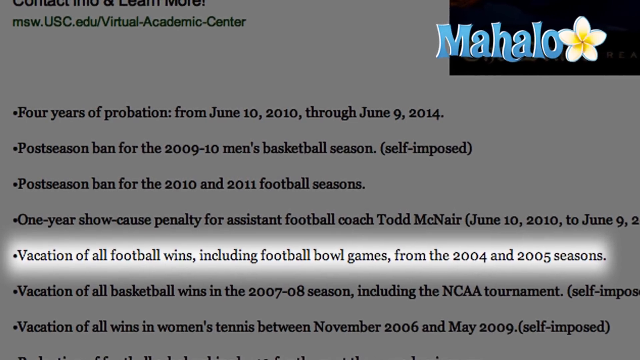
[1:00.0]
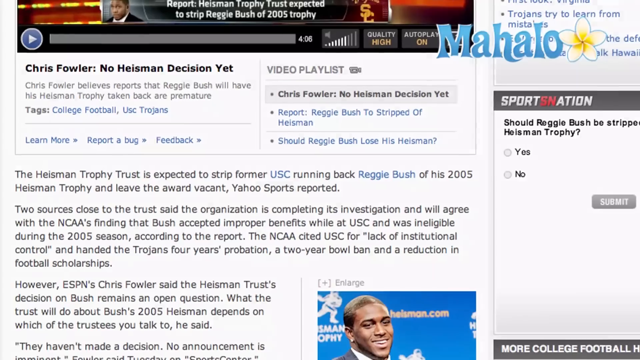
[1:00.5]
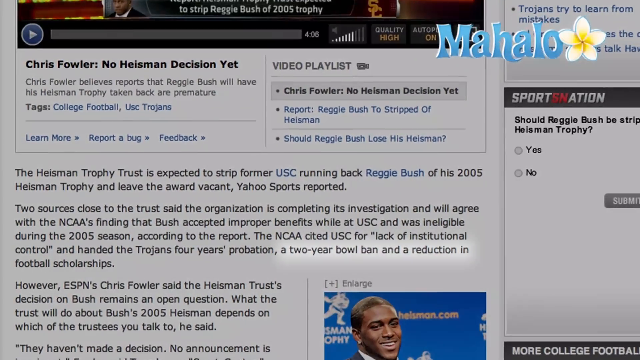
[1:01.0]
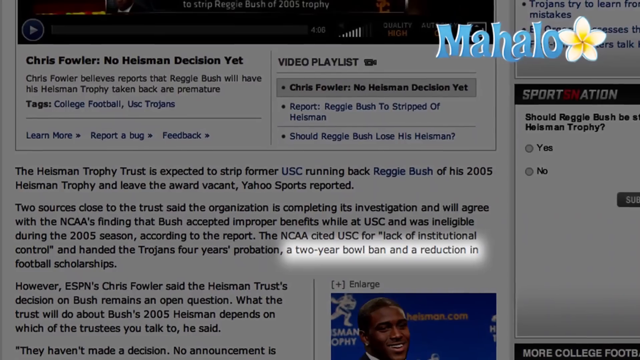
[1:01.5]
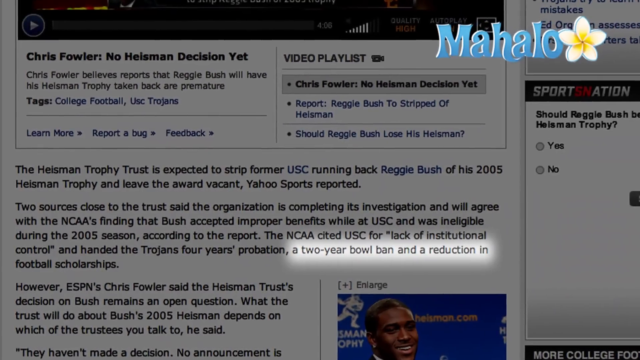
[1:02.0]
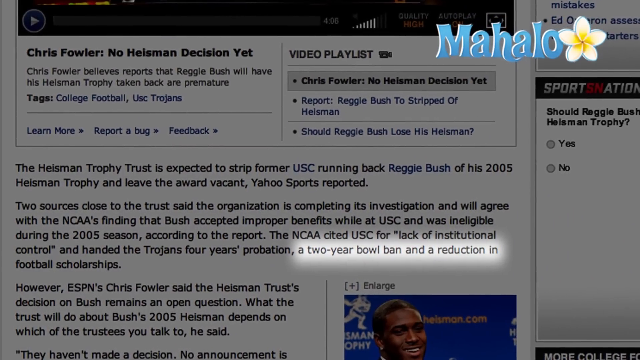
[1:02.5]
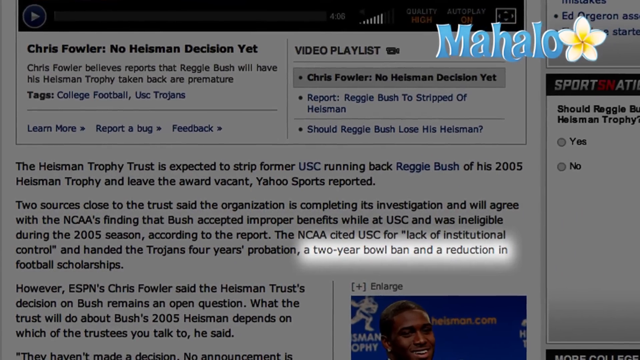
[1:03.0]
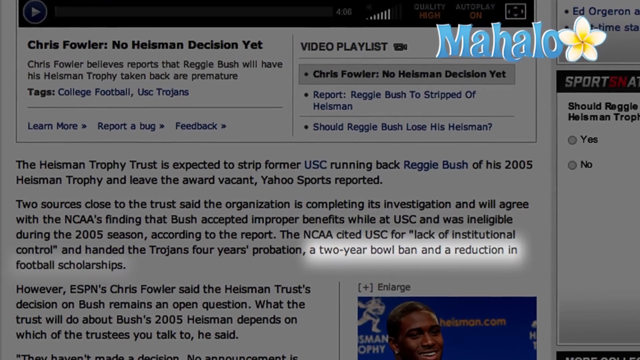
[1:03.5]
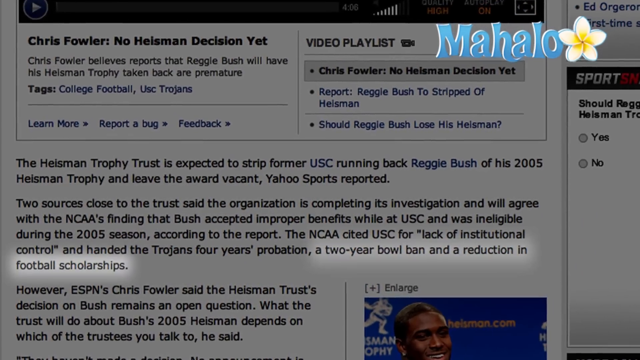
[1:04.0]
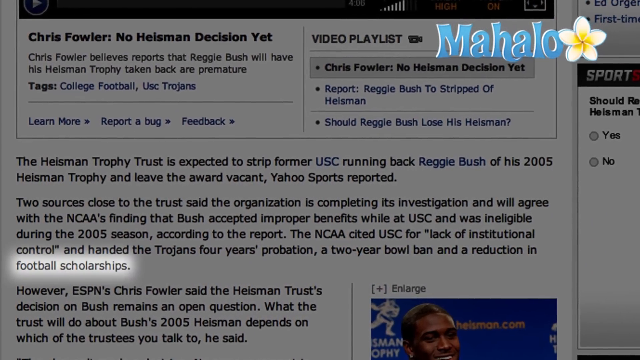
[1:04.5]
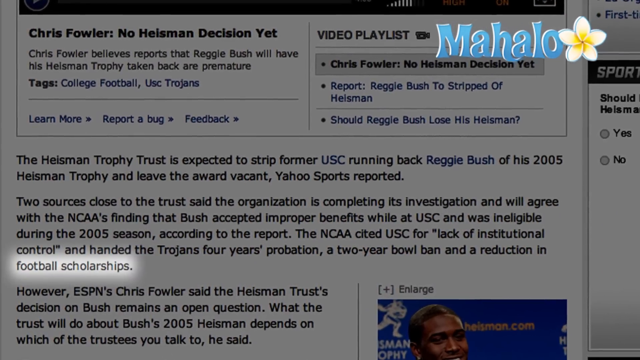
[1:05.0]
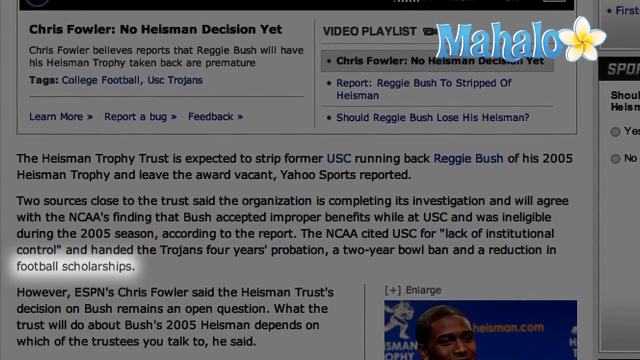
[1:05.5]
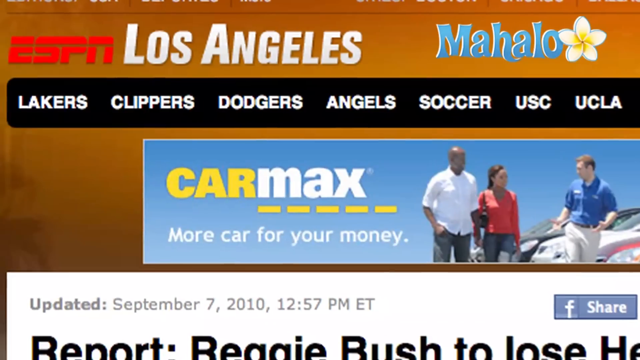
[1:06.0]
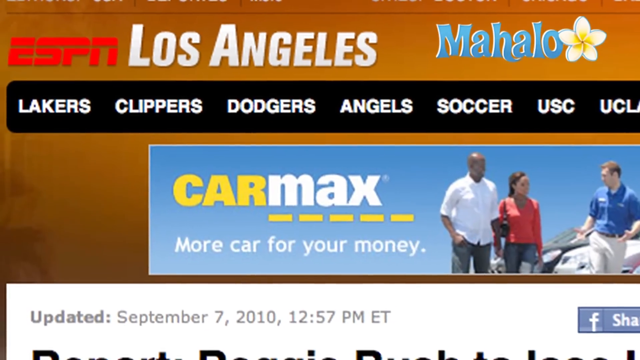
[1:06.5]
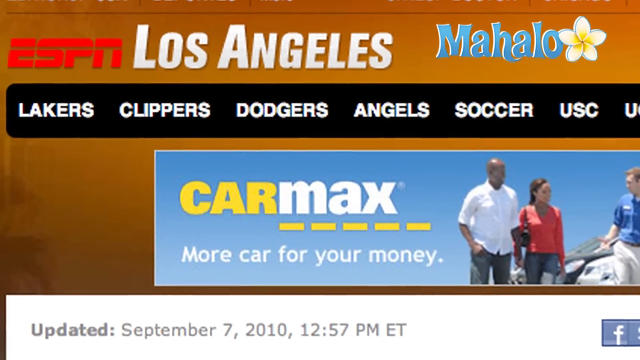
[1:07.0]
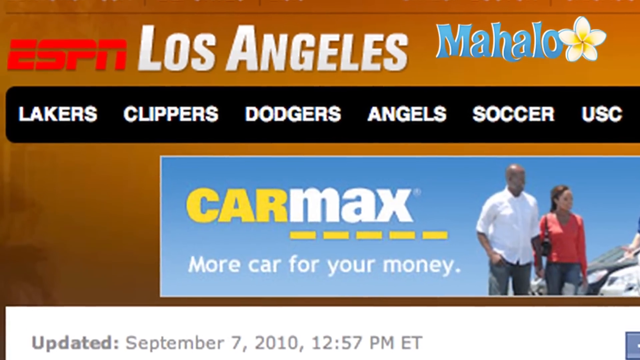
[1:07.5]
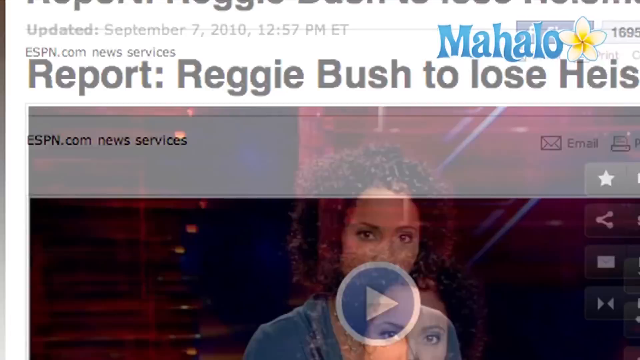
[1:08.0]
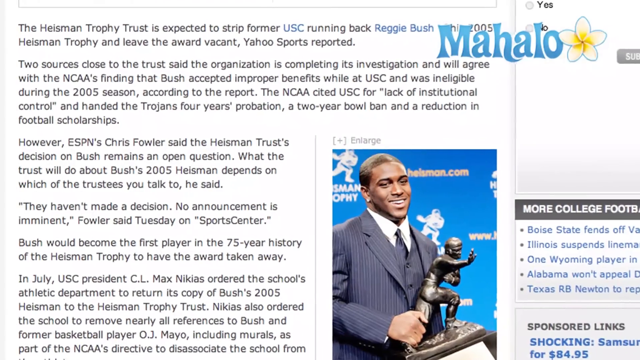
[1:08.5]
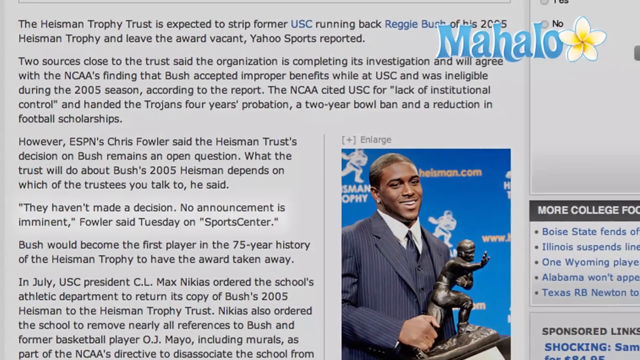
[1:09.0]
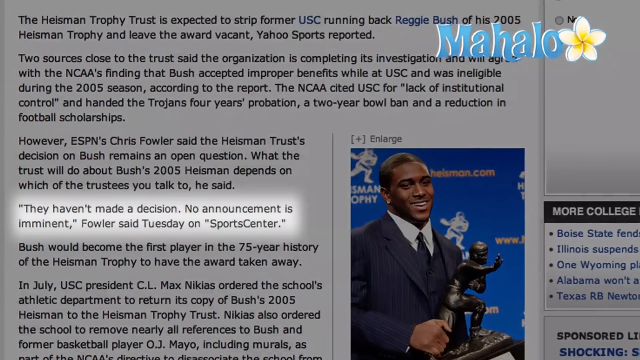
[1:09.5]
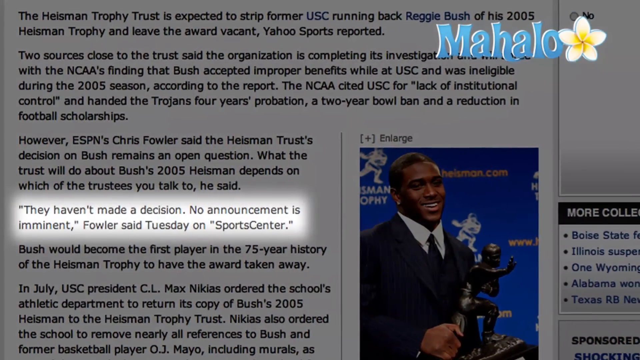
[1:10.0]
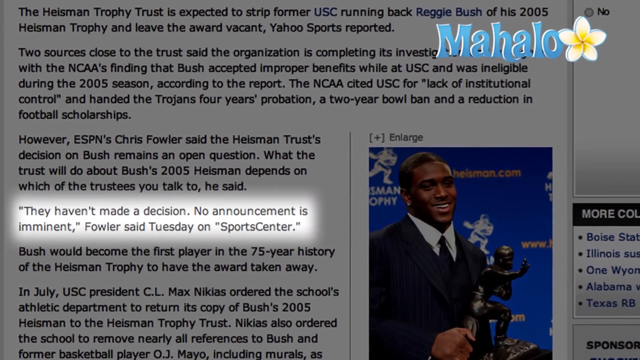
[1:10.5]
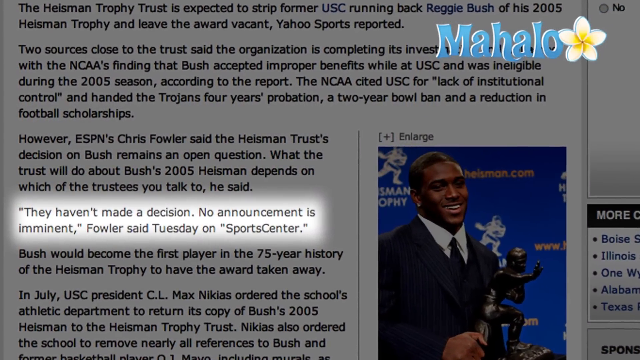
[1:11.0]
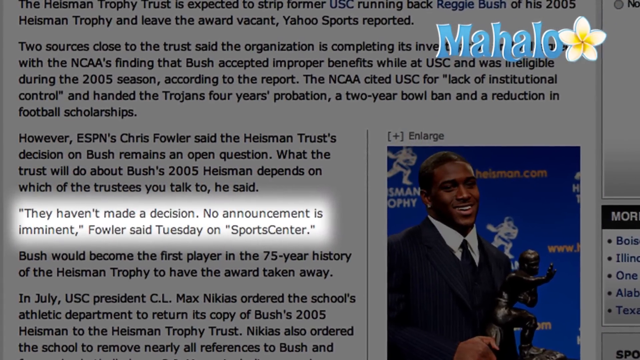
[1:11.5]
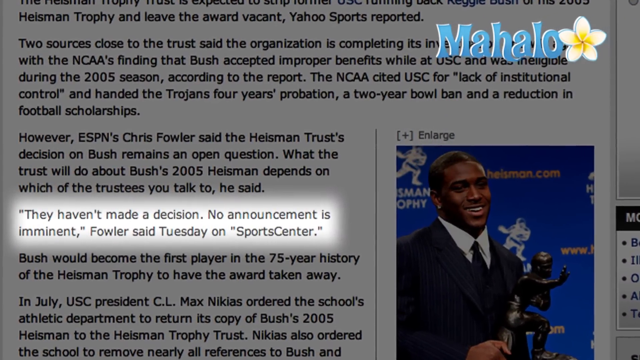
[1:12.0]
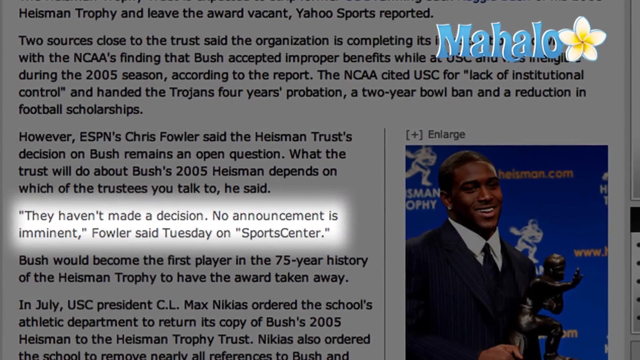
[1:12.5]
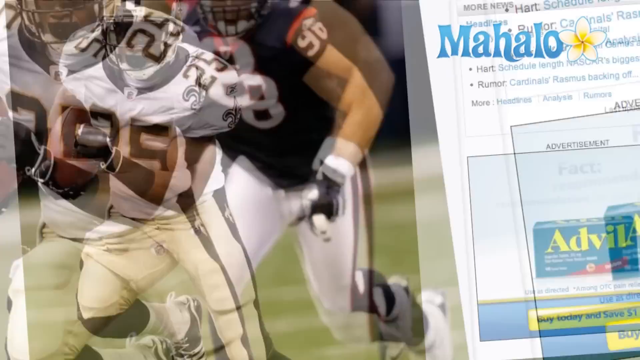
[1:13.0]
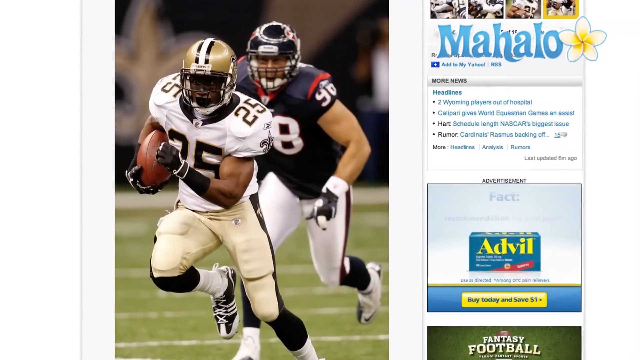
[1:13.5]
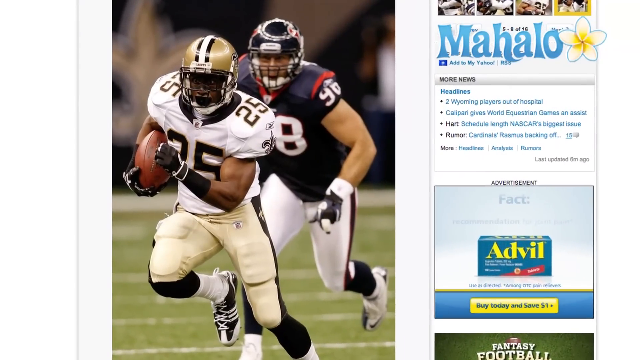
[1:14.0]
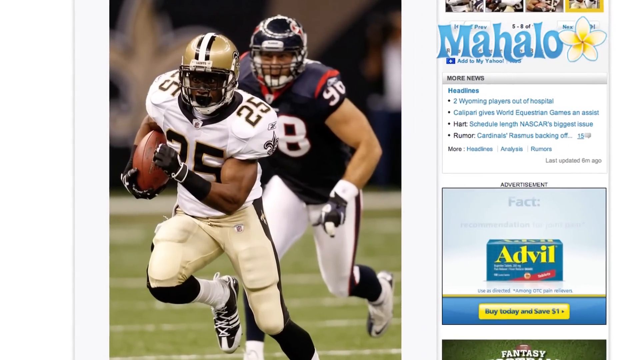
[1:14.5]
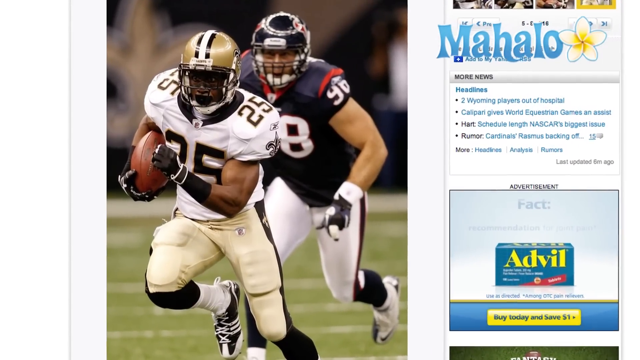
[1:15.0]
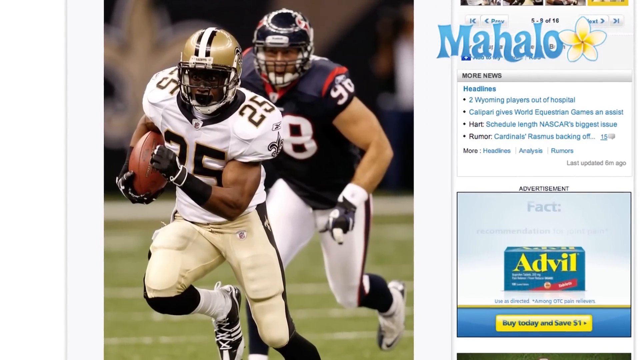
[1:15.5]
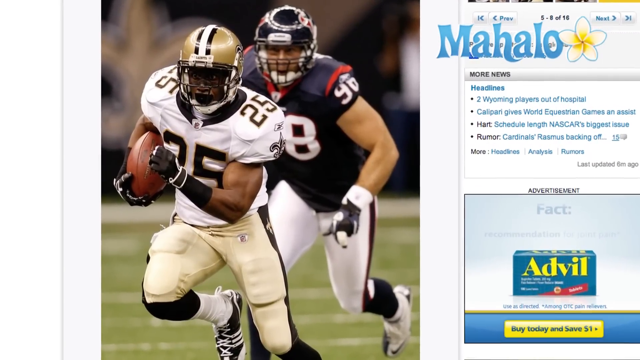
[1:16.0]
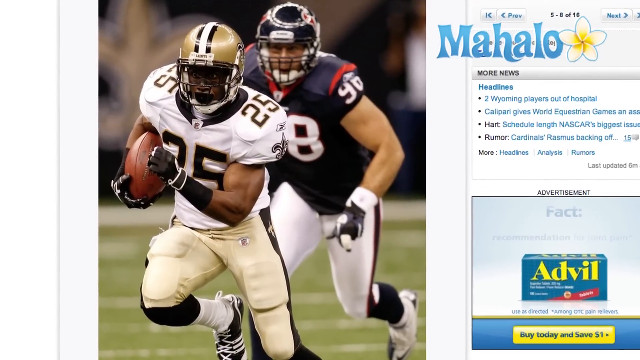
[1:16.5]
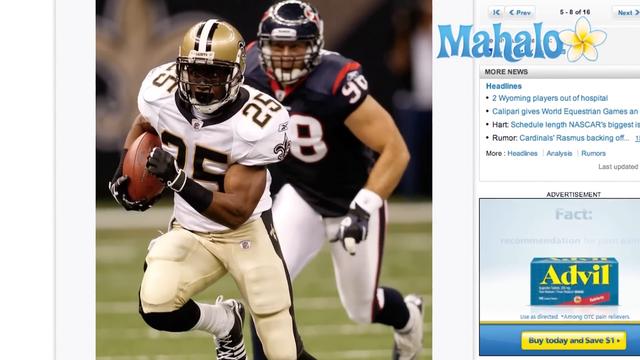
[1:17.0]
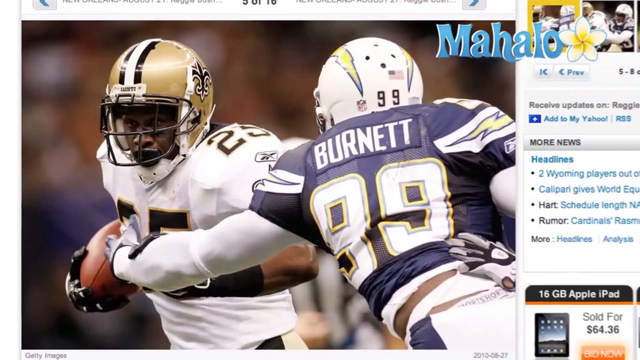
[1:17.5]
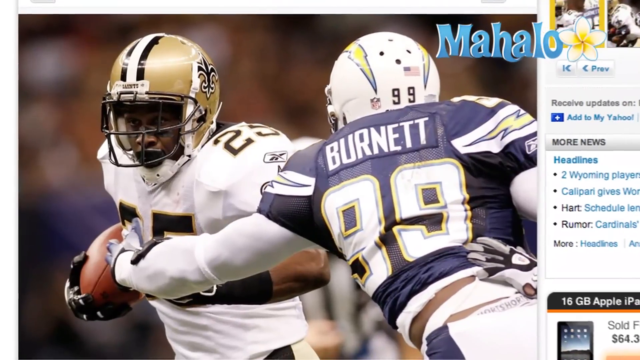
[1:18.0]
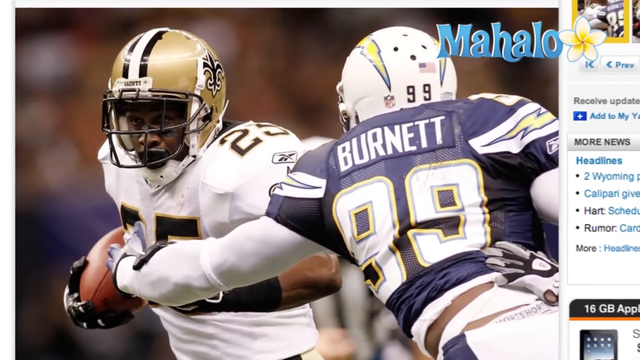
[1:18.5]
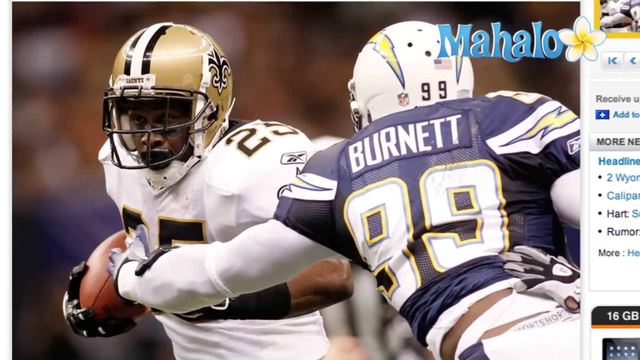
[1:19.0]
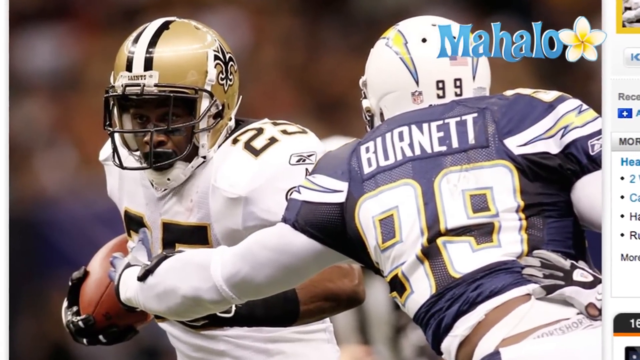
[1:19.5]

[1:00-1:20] The video quickly transitions to another article, where "a two-year ban and a reduction in" is highlighted in white. The view zooms in on the words, and further down "football scholarships" is also highlighted. It quickly flips to another article on a website with a light brown background and a Carfax ad below it; in the top left corner, "ESPN" is in red with "Los Angeles" next to it in white. That transitions to another article that the view zooms in on, with text highlighted in white: "they haven't made a decision, no announcement is imminent. Fowler said Tuesday on SportsCenter," and the zoom continues. Next comes an image of Reggie Bush in the NFL with the Saints, wearing number 25; he appears to be running the ball, with a player behind him. Another clip shows him running the ball while a Chargers player named Burnett tries to strip the ball away from him.